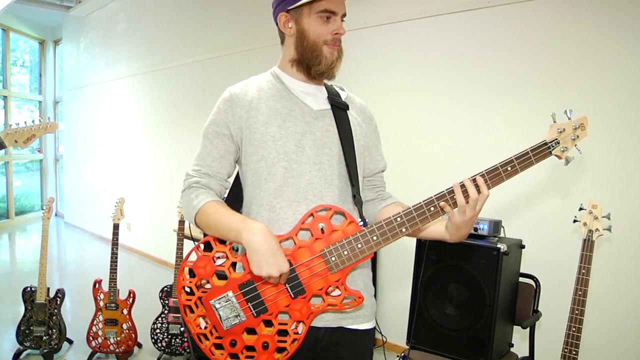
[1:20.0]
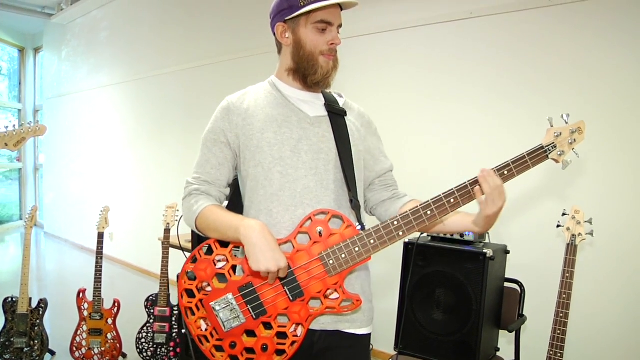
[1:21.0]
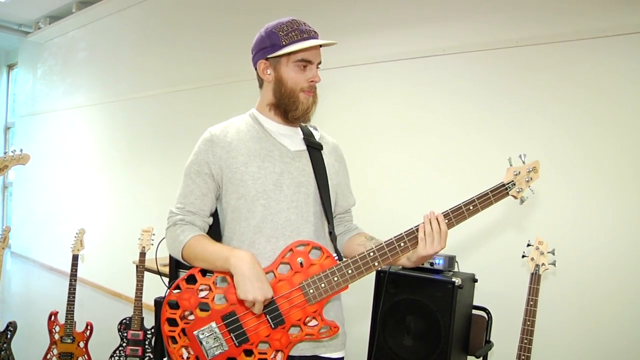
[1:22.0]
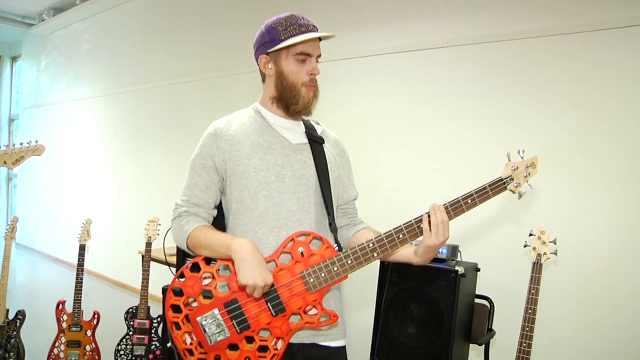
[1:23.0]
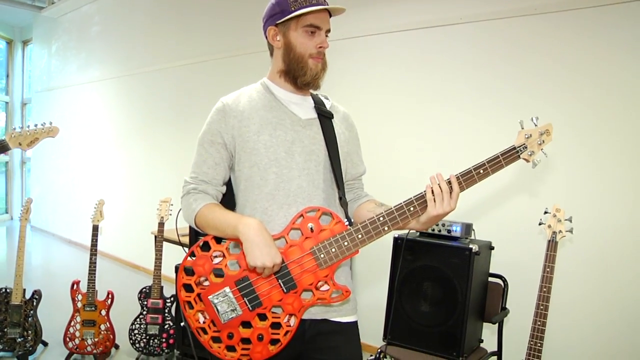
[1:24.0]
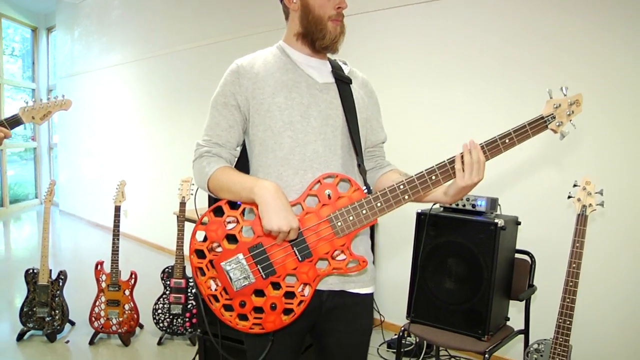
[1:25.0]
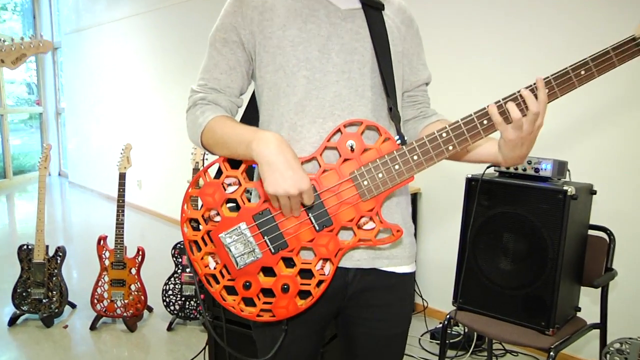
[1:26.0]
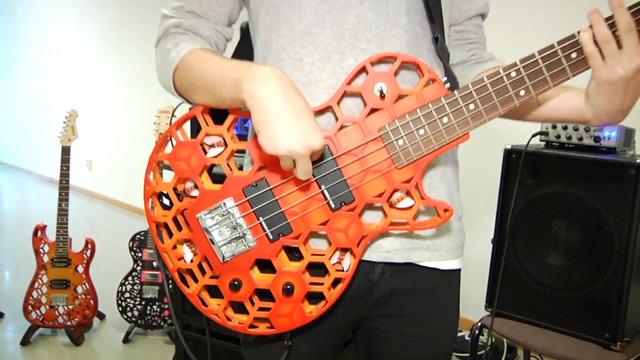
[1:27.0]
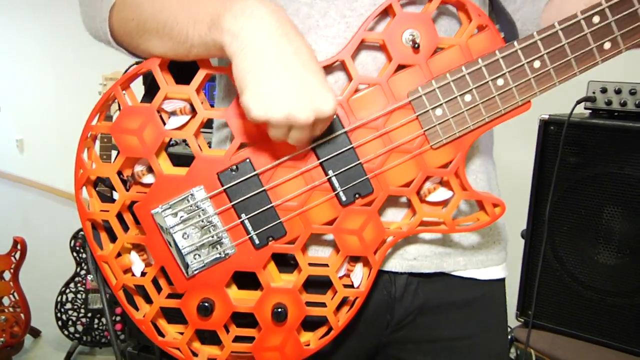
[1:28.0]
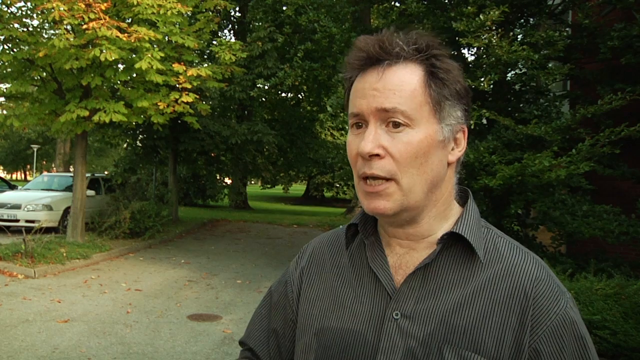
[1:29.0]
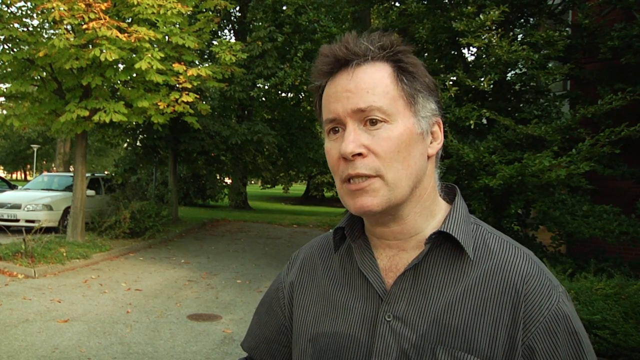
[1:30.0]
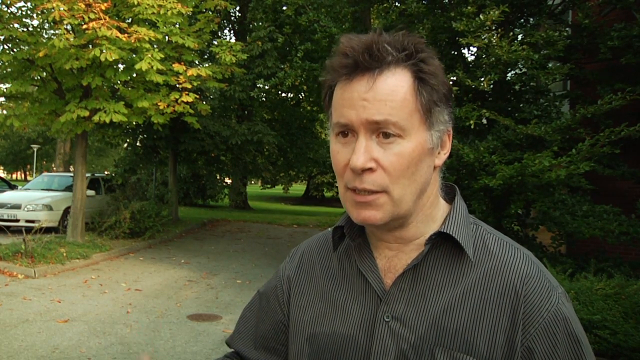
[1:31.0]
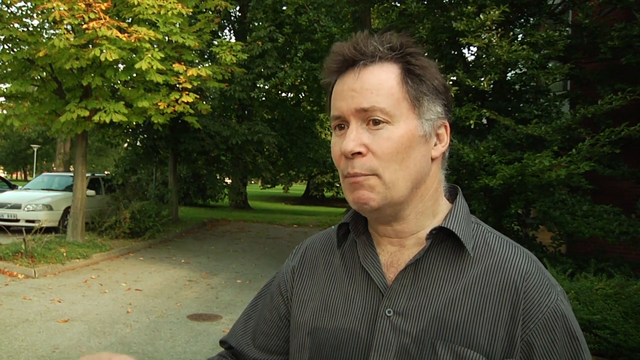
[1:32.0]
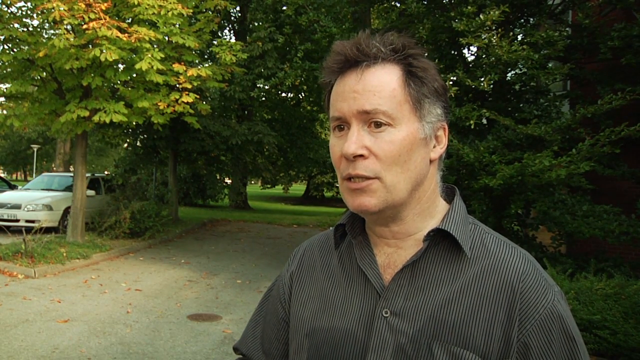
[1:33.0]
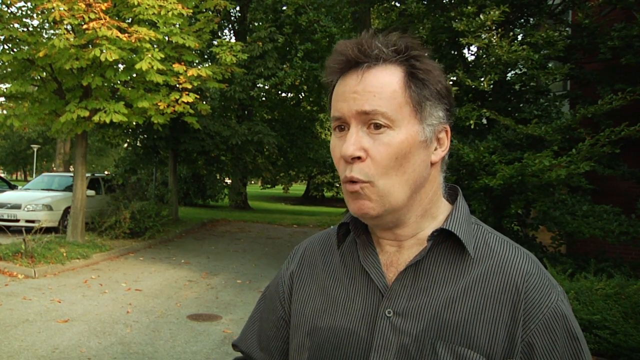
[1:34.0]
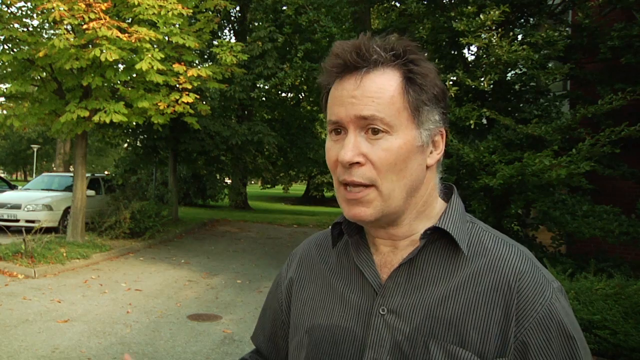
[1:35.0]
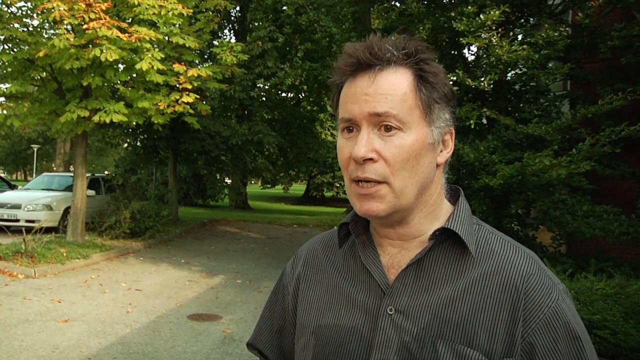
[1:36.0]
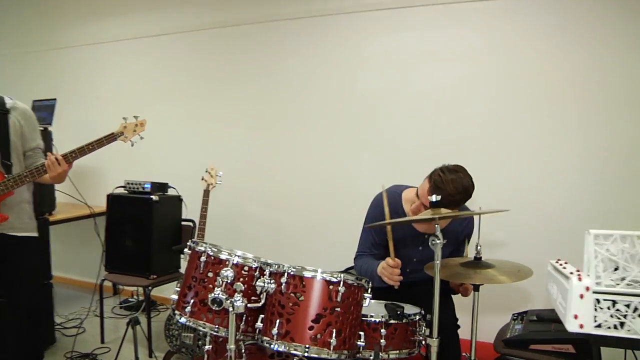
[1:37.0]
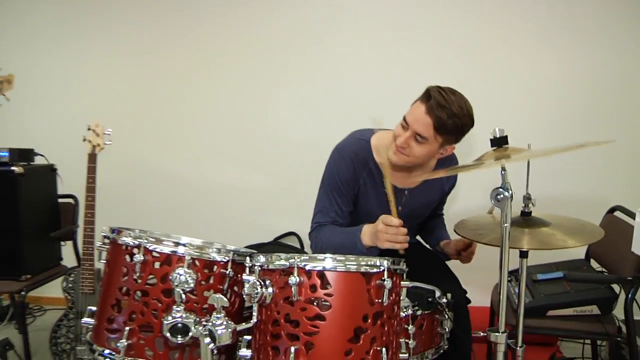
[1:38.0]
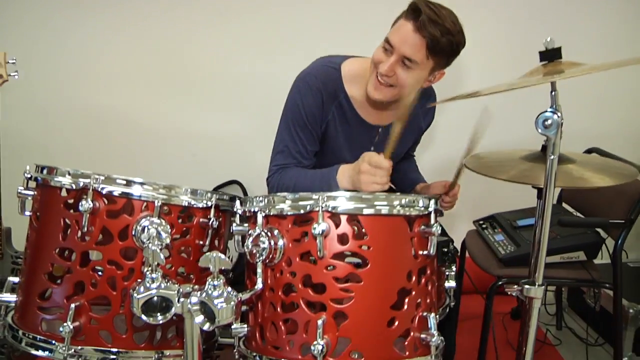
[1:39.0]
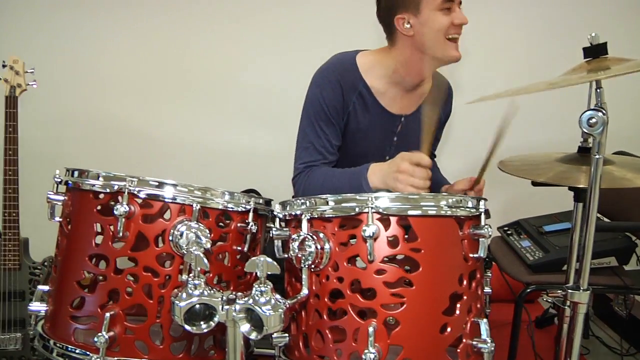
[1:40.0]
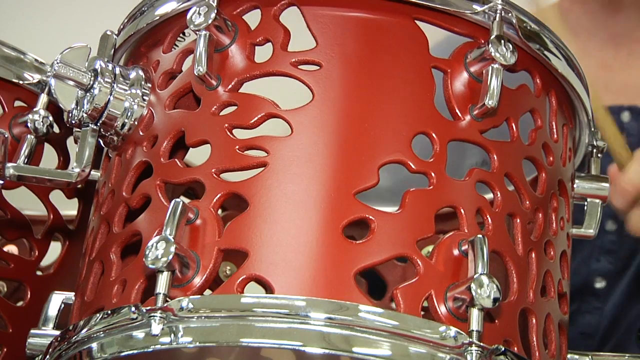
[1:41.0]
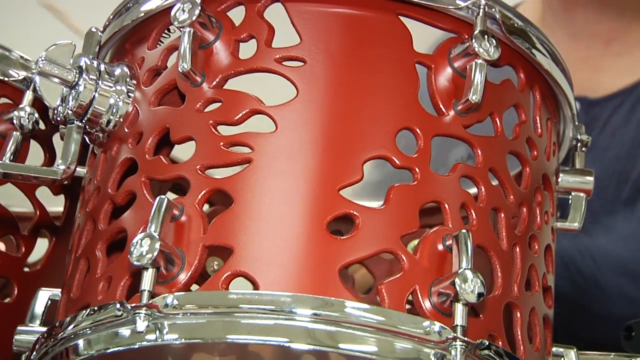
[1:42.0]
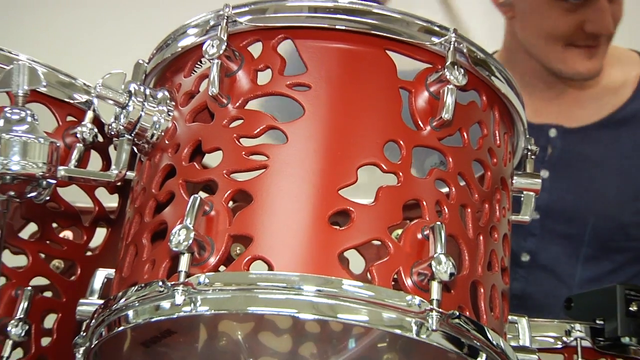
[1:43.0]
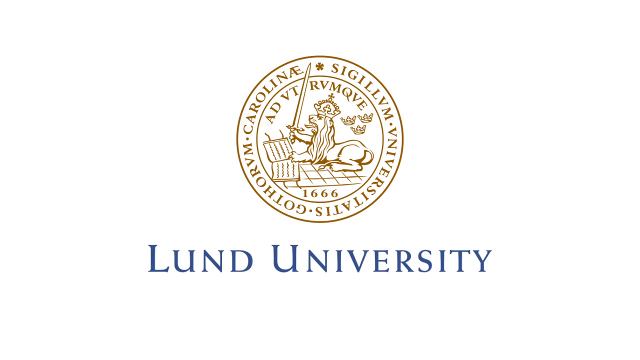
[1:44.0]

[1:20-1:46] The guy plays the guitar, apparently with his baseball cap back on. He has a long brown beard that takes up a lot of his face, and wears a purple cap and a light-colored shirt. The professor appears again in the talking-head interview among the trees, wearing a basic black button-up shirt. It cuts to the drummer, who drums with his head kind of cocked to the side and a big smile on his face. Another drum with the same hole design is shown; the drums looked like regular drums from a distance, but zoomed in they have that design. At the end, Lund University appears with an icon representing it, somewhat like a coat of arms: gold writing in a circle, a drawing of some type of animal, possibly a lion, holding a sword, and the year 1666.